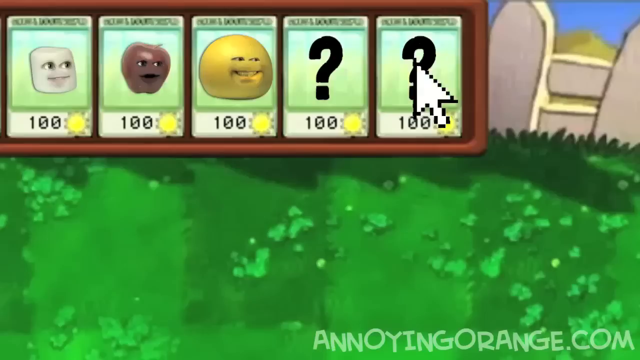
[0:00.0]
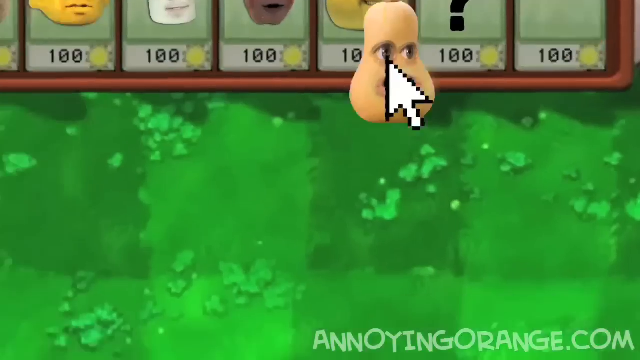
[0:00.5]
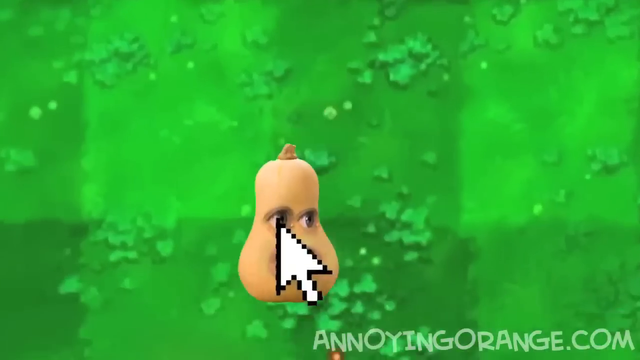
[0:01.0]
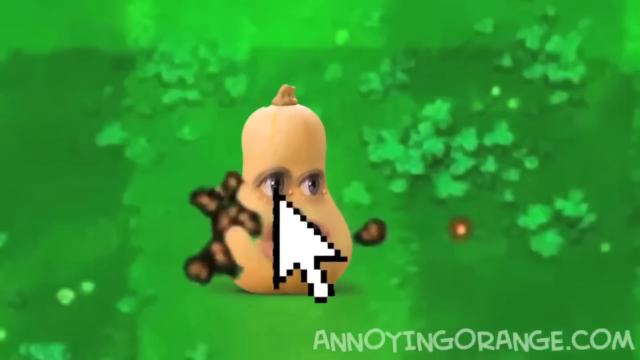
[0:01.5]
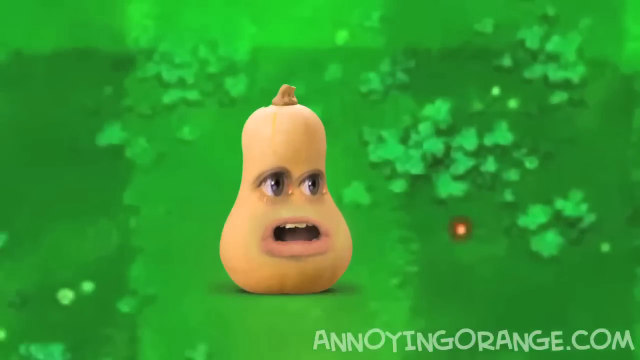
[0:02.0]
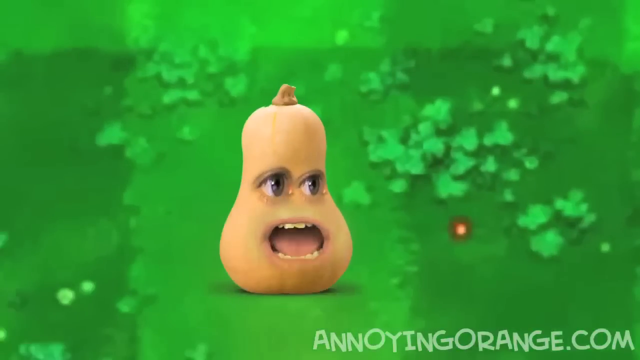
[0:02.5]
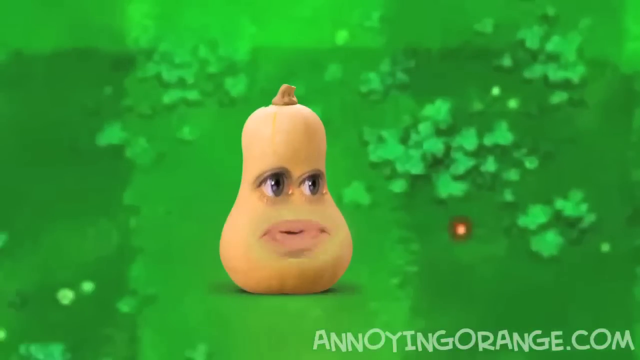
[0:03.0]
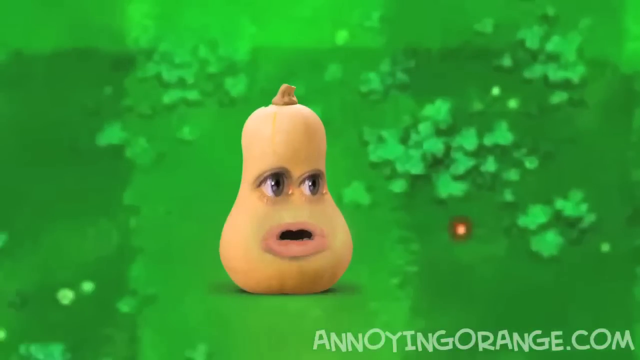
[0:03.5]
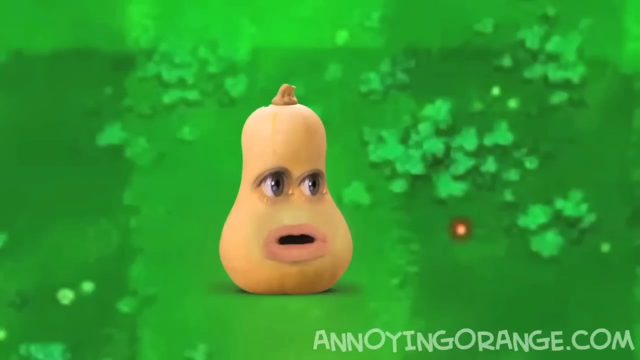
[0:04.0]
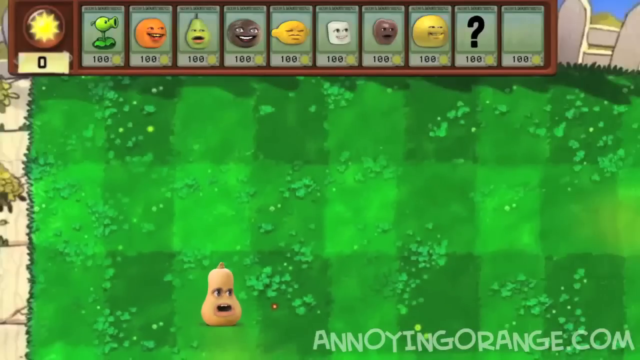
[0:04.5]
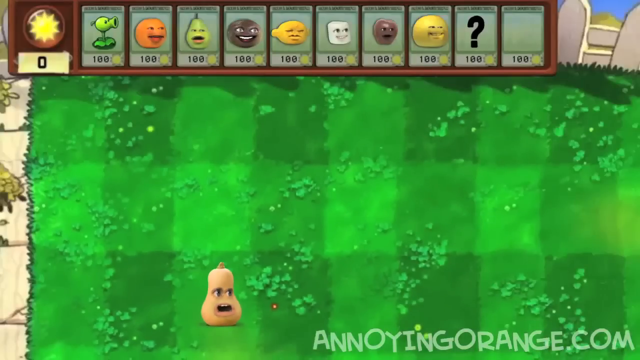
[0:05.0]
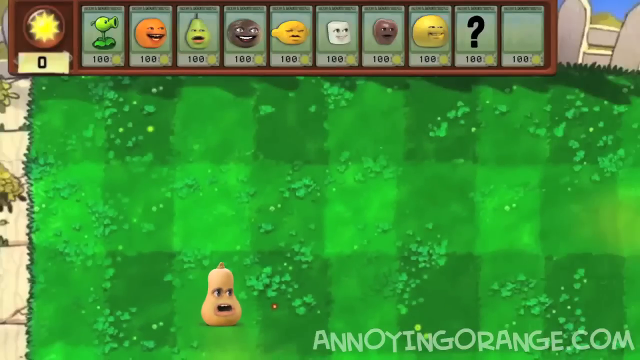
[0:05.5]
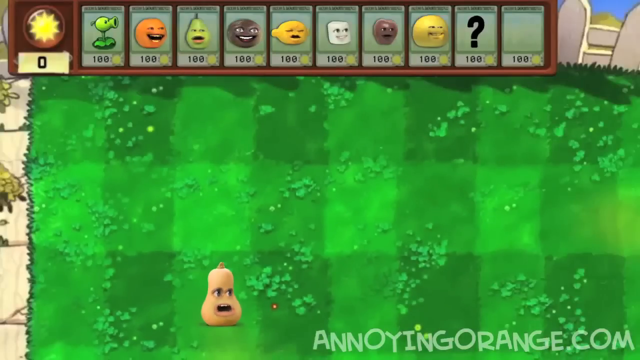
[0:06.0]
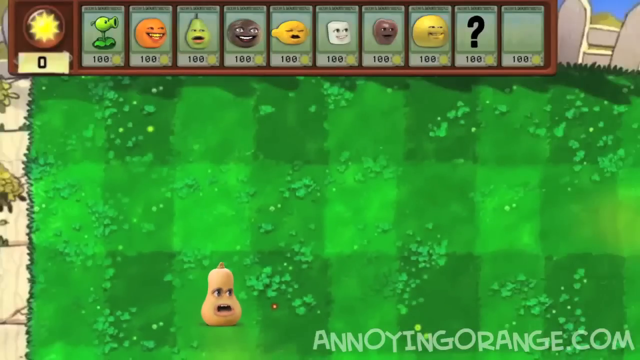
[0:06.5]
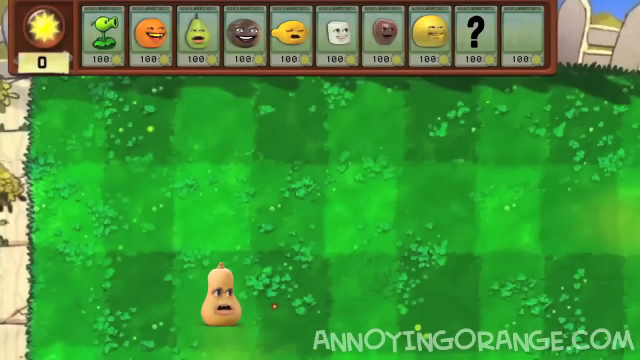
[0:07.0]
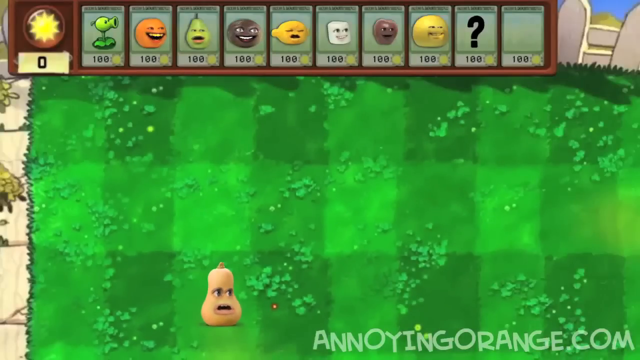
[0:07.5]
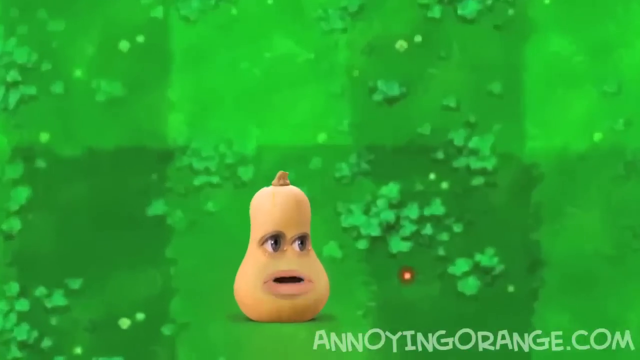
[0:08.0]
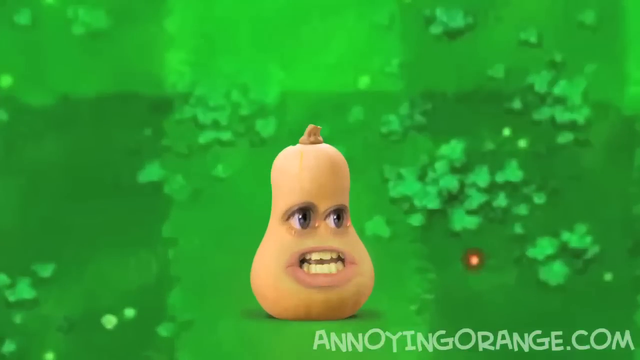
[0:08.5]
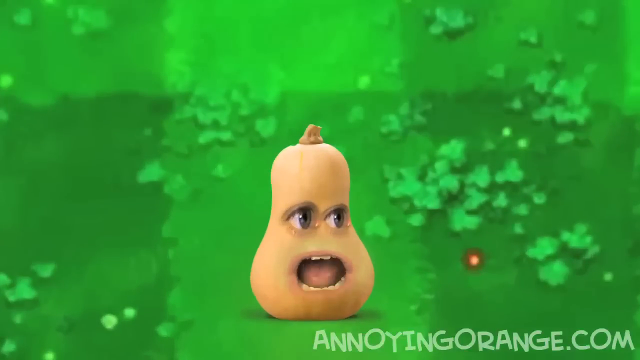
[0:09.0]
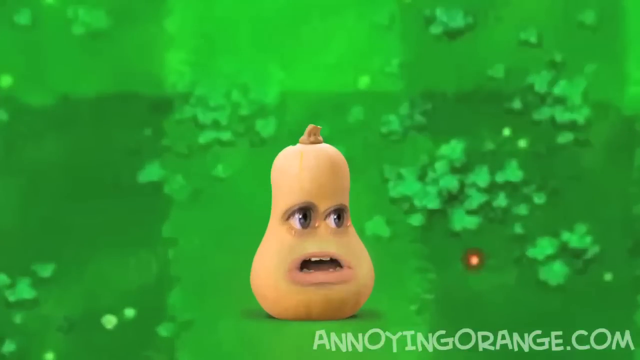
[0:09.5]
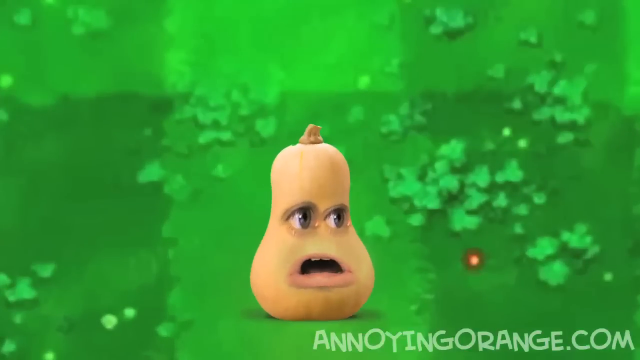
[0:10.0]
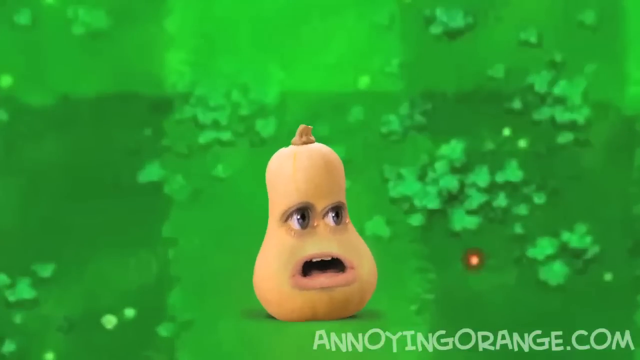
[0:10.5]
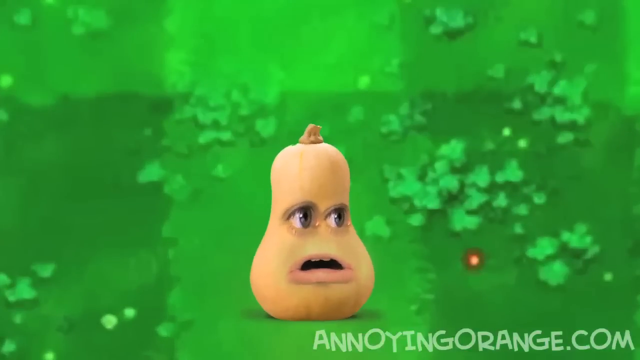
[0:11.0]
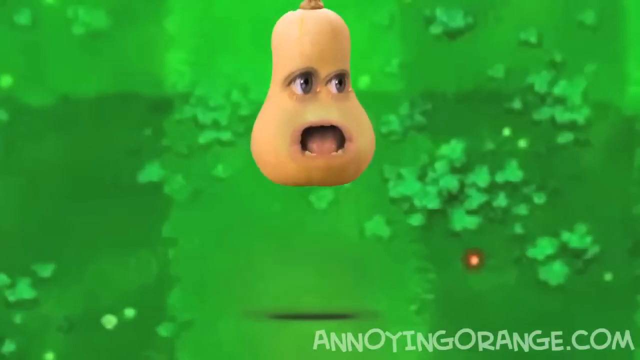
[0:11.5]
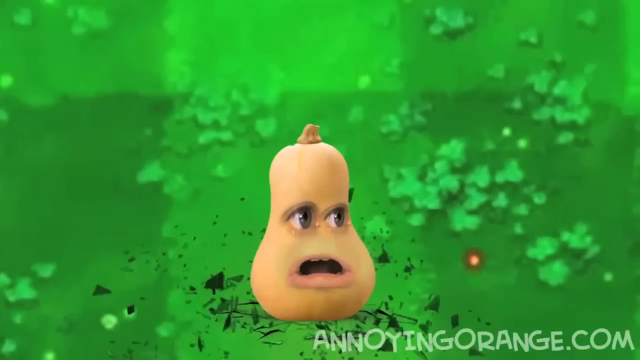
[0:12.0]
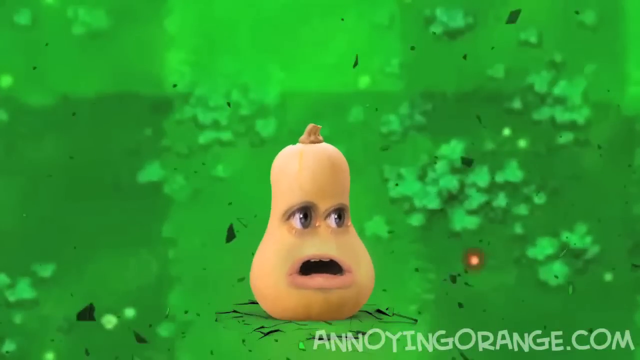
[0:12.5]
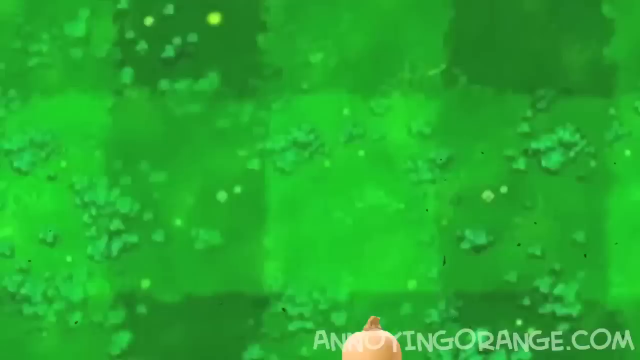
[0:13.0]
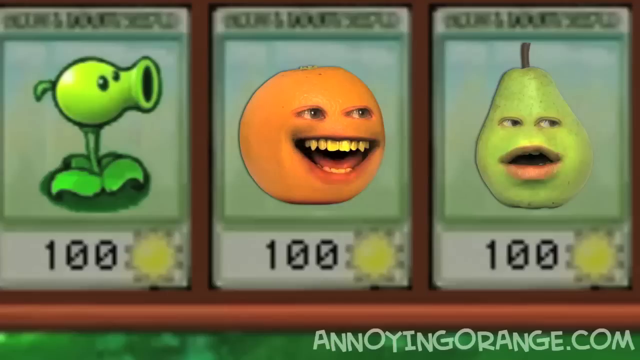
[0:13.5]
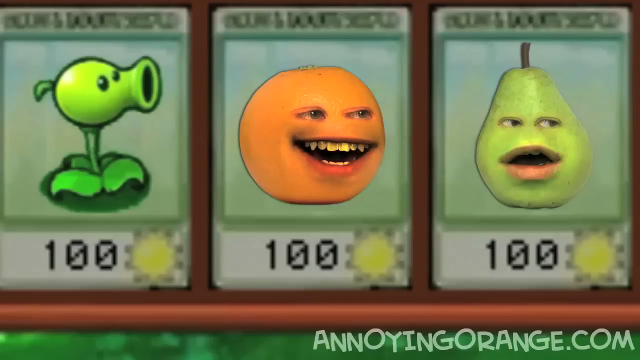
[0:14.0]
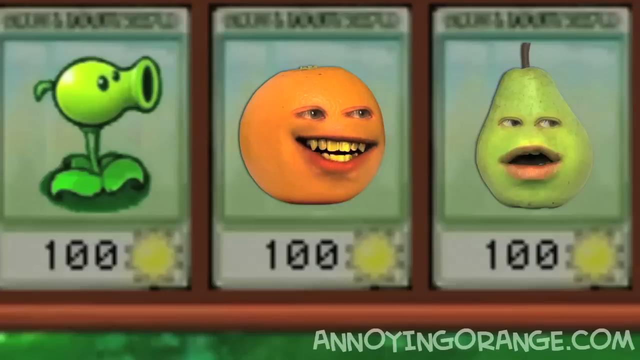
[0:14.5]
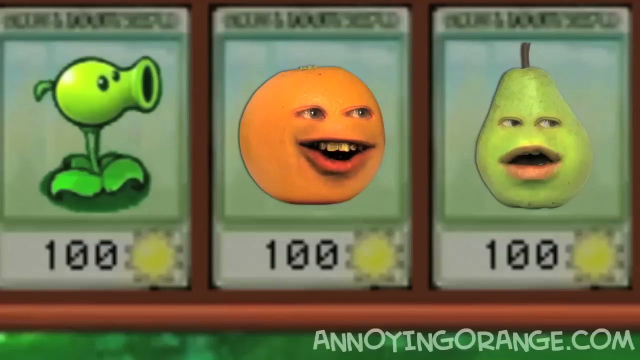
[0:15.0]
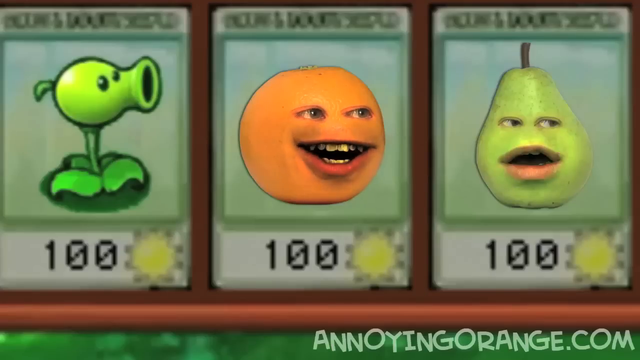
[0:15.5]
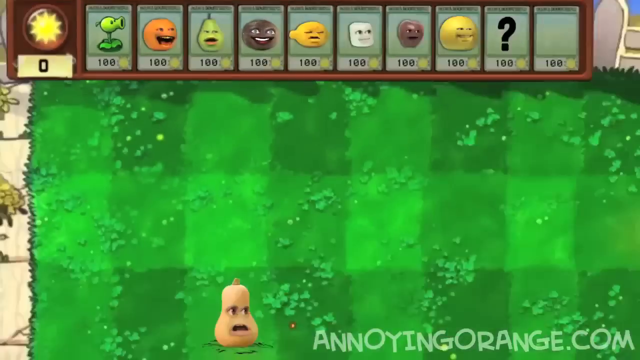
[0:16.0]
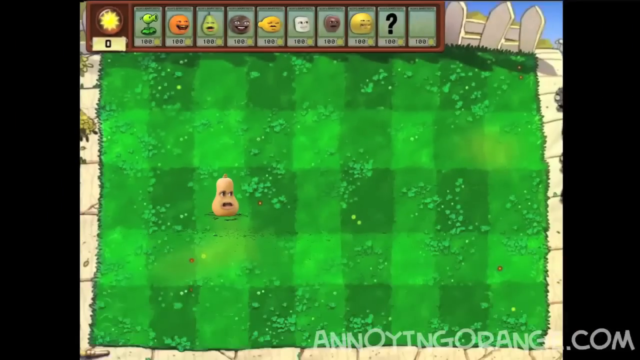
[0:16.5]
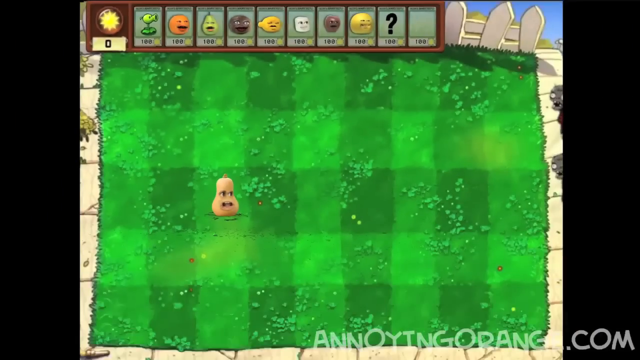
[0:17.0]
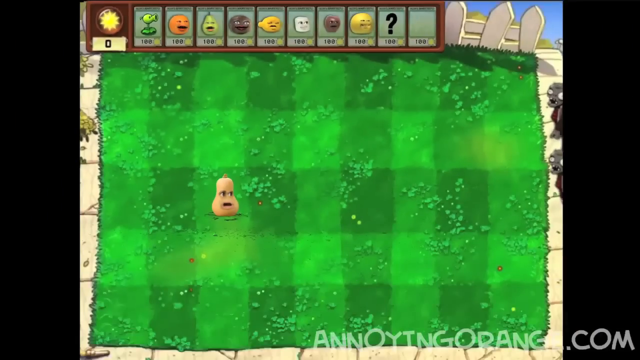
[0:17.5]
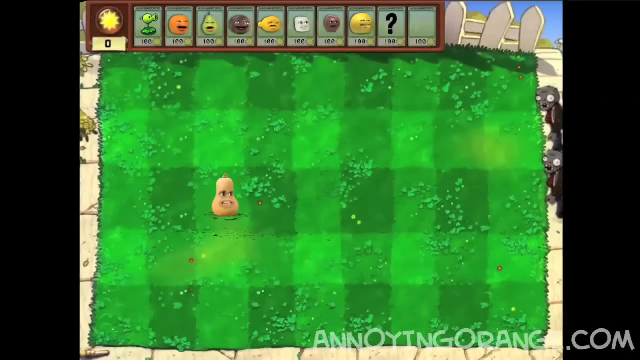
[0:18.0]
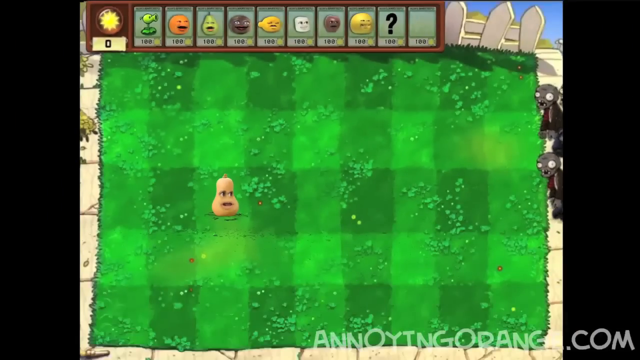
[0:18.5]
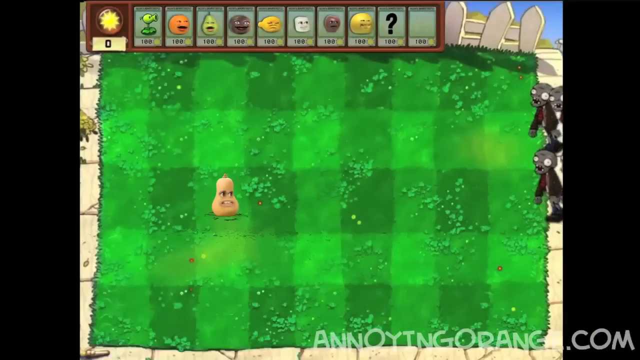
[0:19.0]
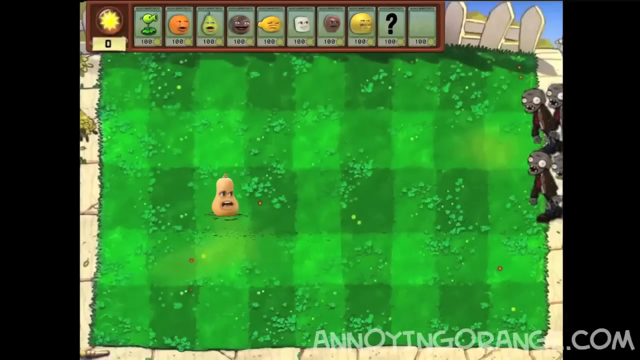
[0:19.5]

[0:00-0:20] The video opens with footage from a video game. In the bottom right-hand corner of the screen, superimposed text reads "annoyingorange.com" in semi-transparent capital letters. The scene appears to be a field or a garden with a fence at the top. Across the top of the screen is a selection bar with five cells. From left to right there is what might be a marshmallow with a face on it, some sort of apple with a face on it, and a lemon with a face on it, while the right two boxes hold black question marks. A white arrow icon is over the far-right box, which is selected; it turns into a butternut squash with a face on it, which the arrow drags down and deposits on the grass. The squash's face is very human, with two human eyes and an animated human mouth, and the squash starts talking. The view zooms out to show the entire garden with the selection bar all along the top, which includes other fruit and vegetables, among them an orange that starts to speak. The view zooms back in on the squash, which appears to reply and look concerned. It jumps up and falls down to the ground, causing the ground to crack. The view zooms up to the orange, which speaks further, then pulls back out to the full garden scene from above as what appear to be zombies, black figures, move in slowly from the right-hand side of the screen.